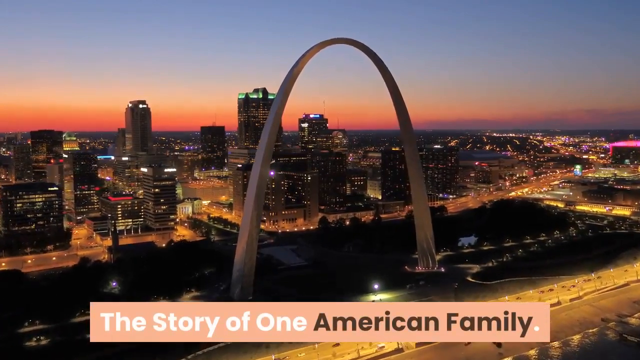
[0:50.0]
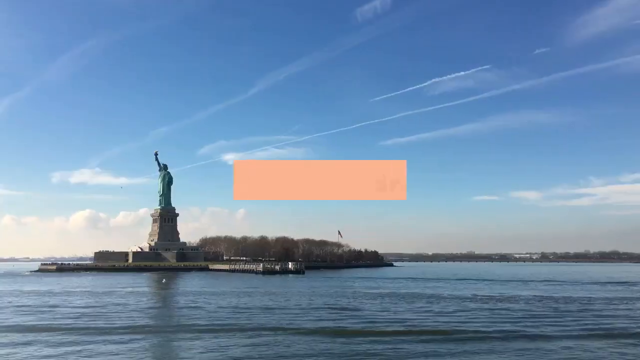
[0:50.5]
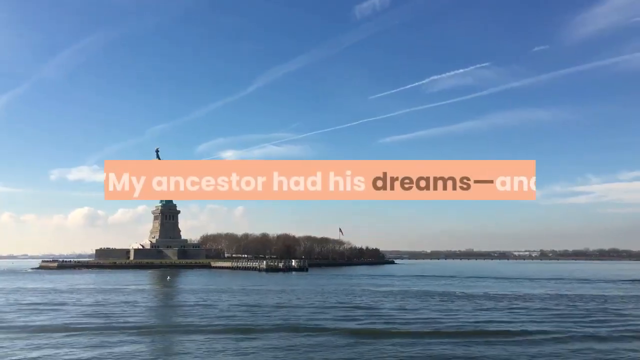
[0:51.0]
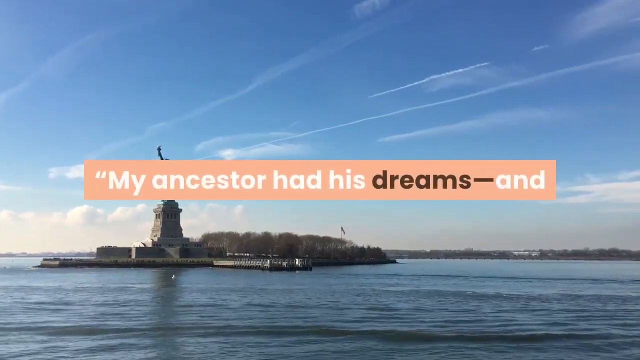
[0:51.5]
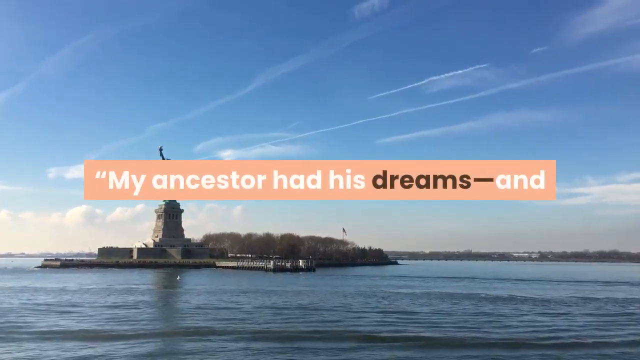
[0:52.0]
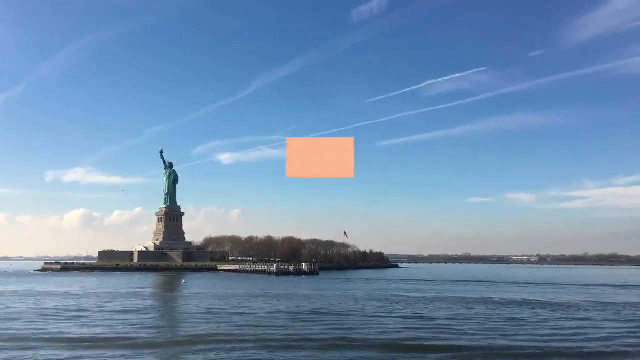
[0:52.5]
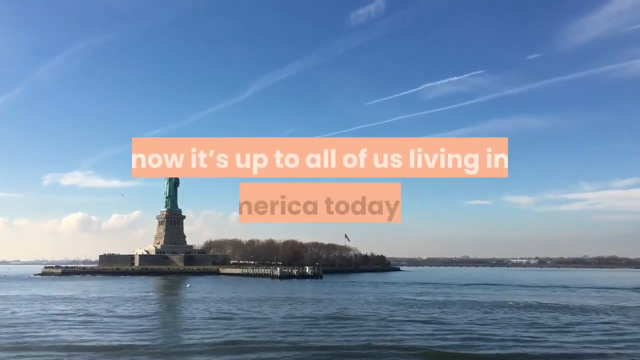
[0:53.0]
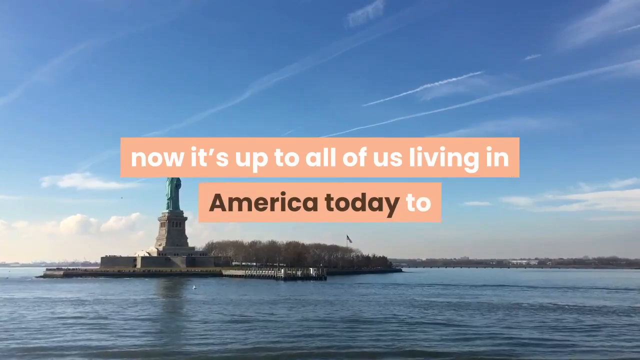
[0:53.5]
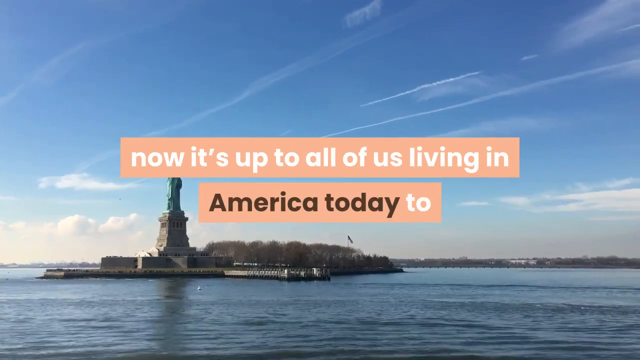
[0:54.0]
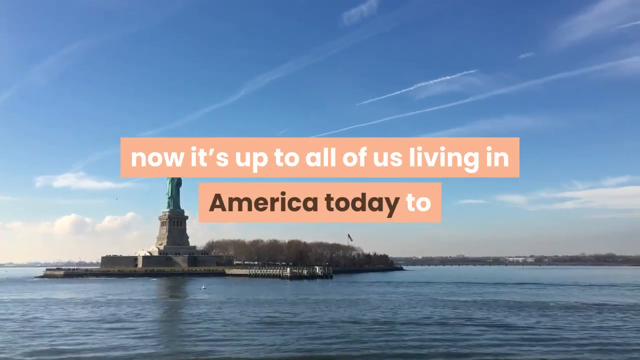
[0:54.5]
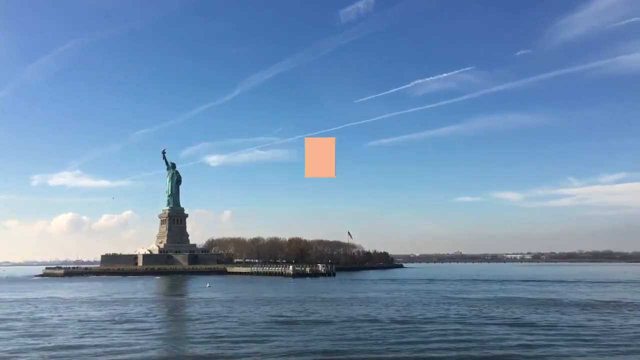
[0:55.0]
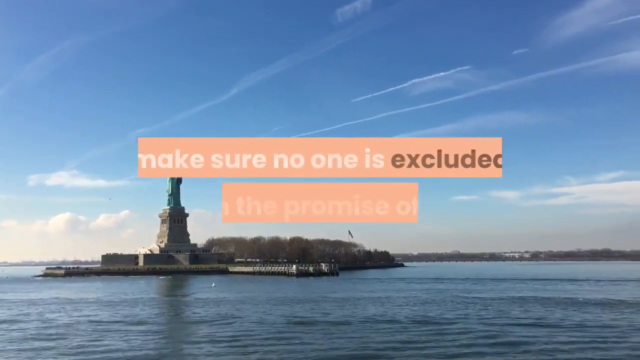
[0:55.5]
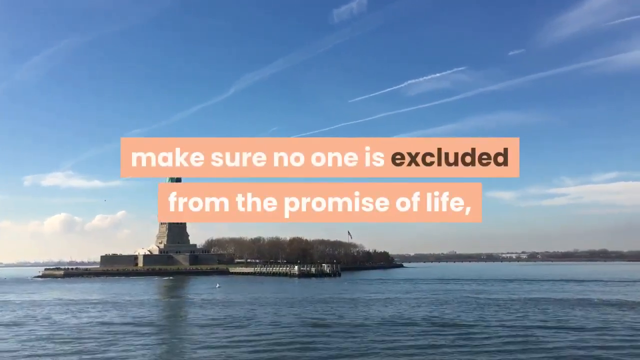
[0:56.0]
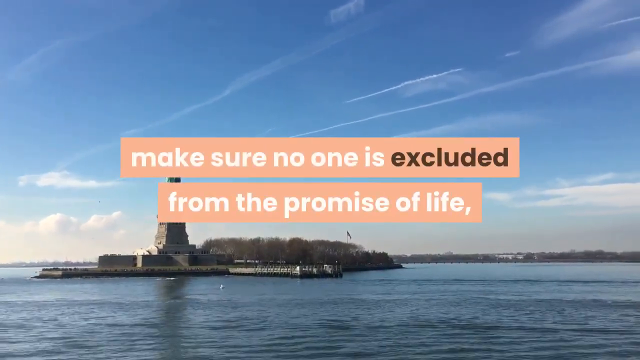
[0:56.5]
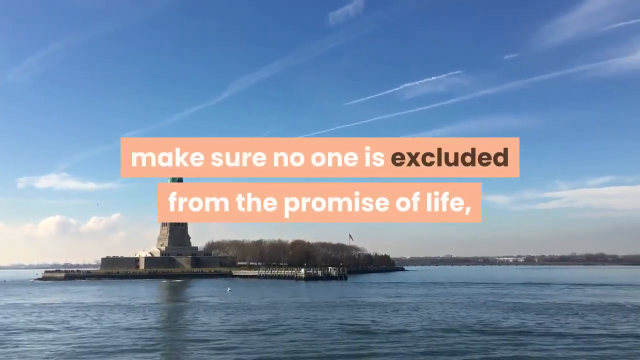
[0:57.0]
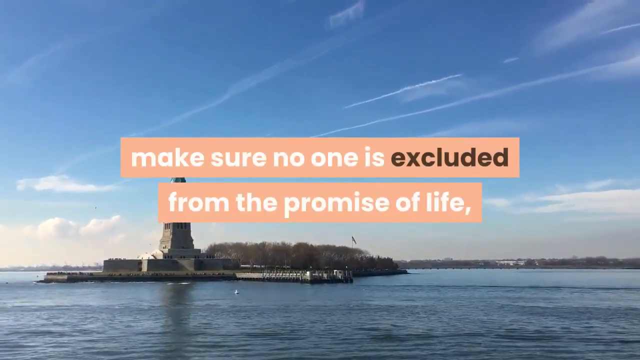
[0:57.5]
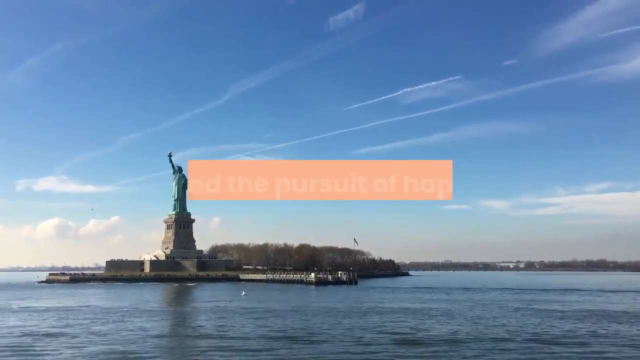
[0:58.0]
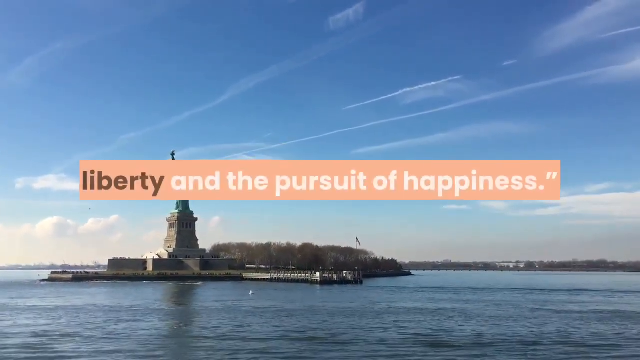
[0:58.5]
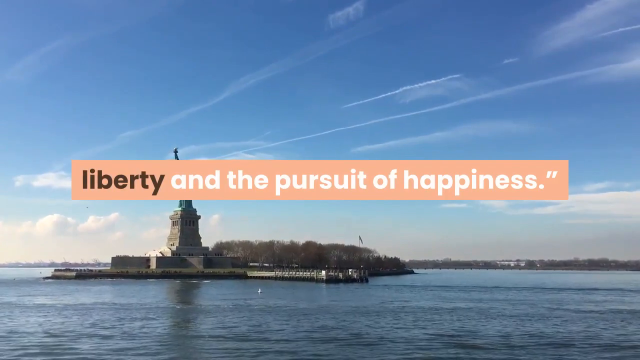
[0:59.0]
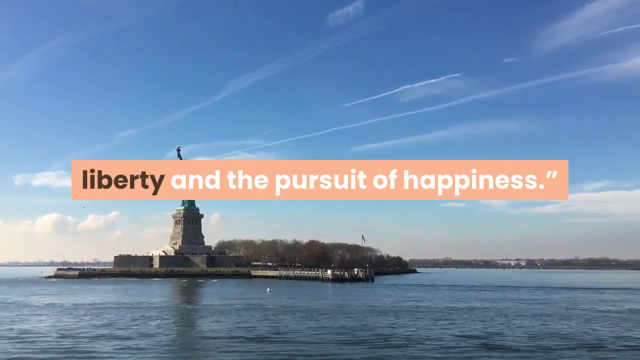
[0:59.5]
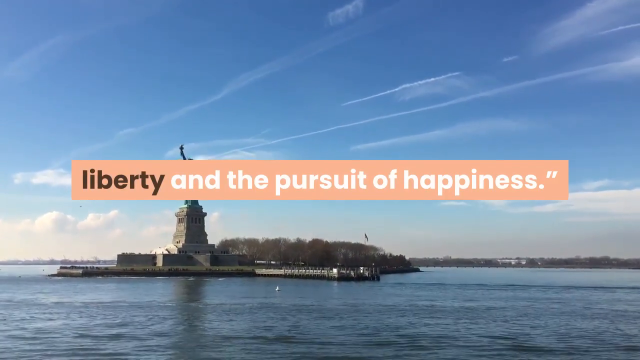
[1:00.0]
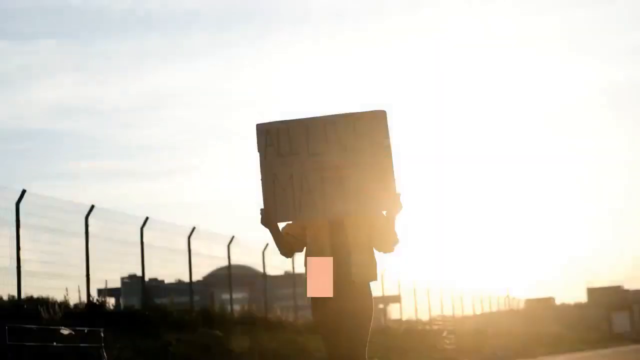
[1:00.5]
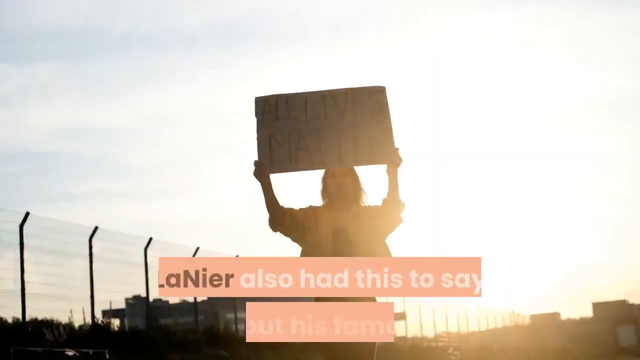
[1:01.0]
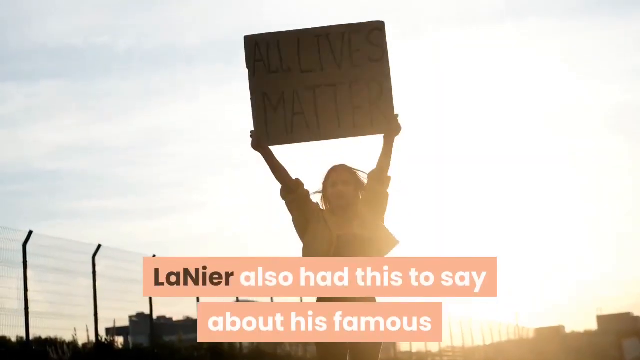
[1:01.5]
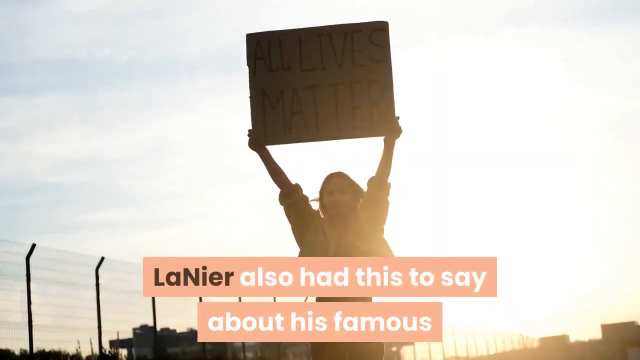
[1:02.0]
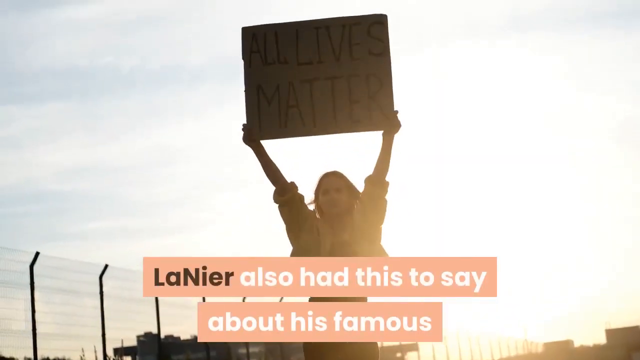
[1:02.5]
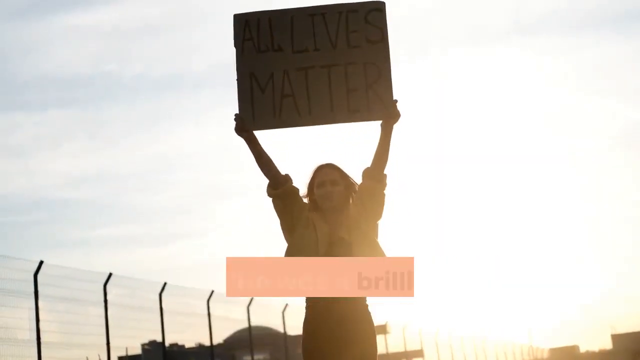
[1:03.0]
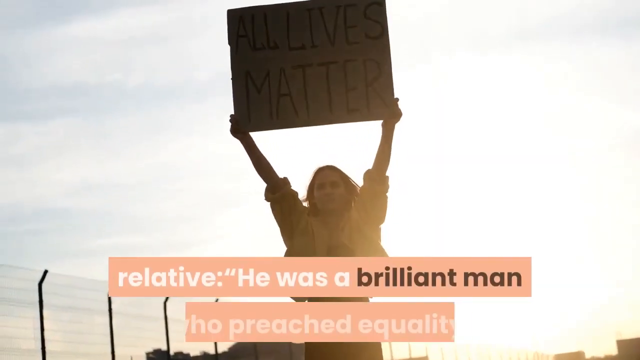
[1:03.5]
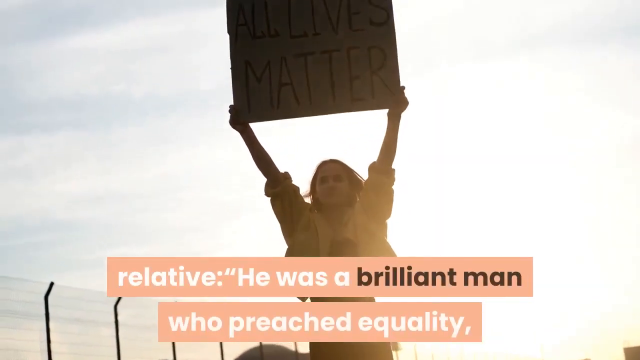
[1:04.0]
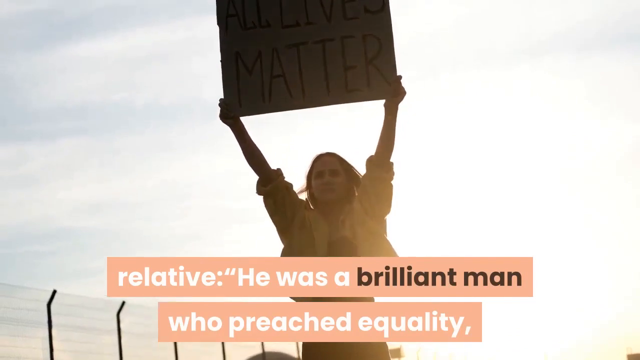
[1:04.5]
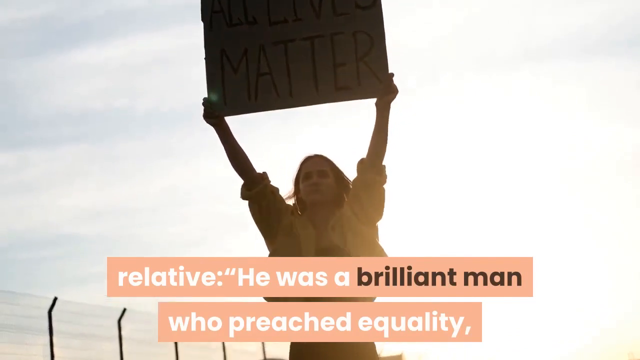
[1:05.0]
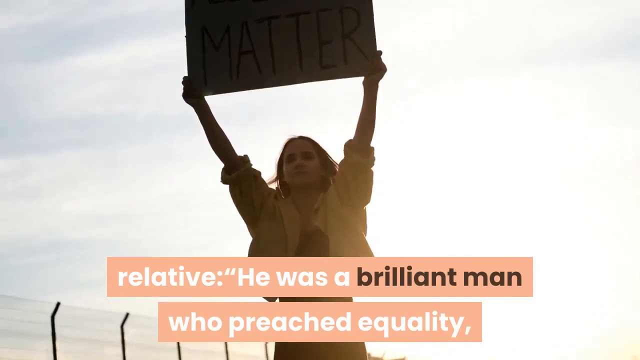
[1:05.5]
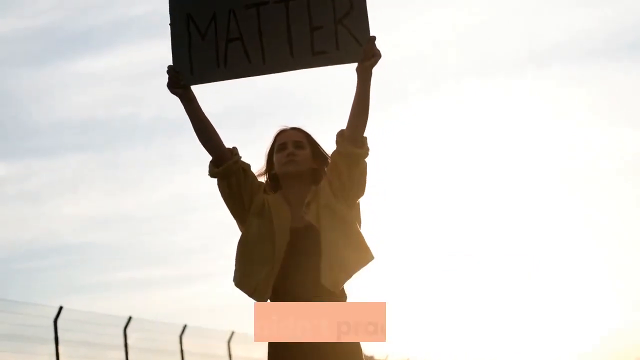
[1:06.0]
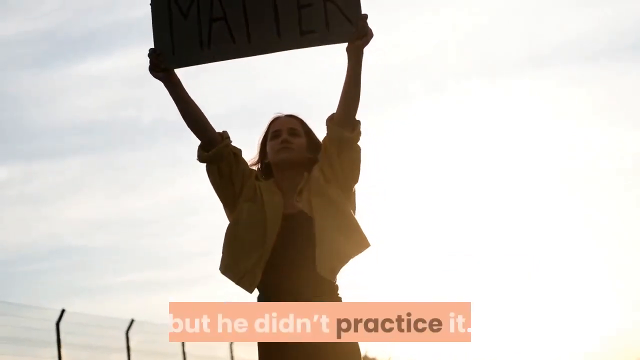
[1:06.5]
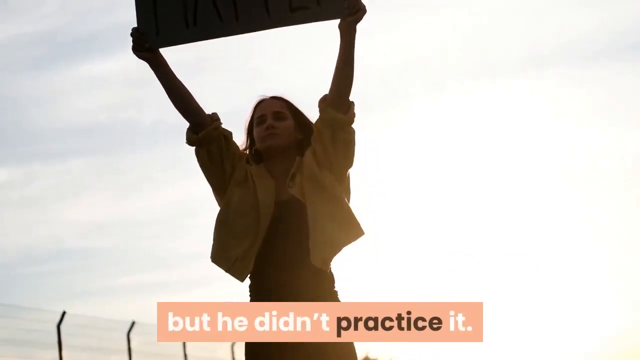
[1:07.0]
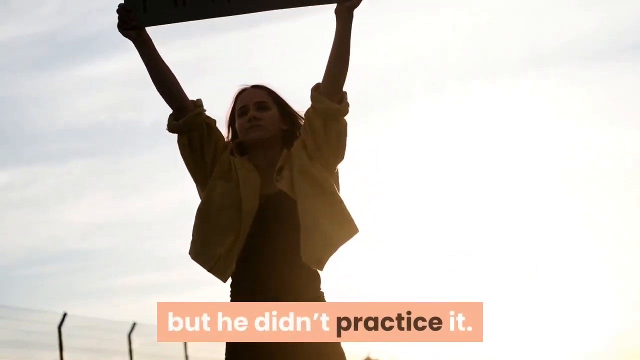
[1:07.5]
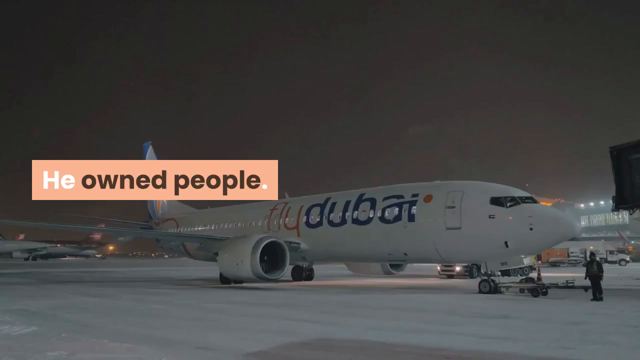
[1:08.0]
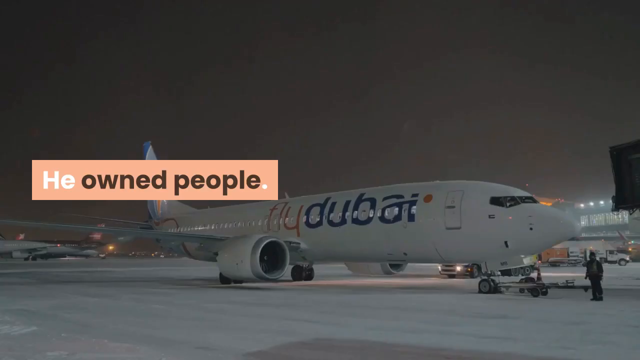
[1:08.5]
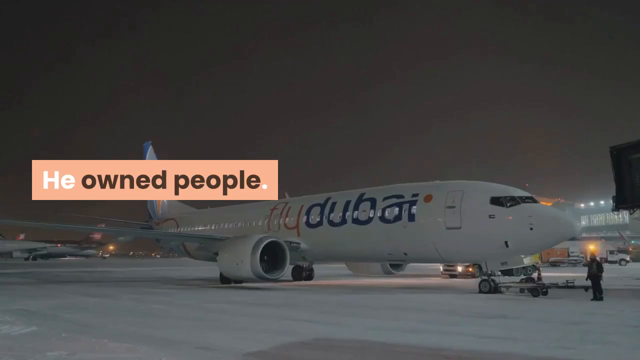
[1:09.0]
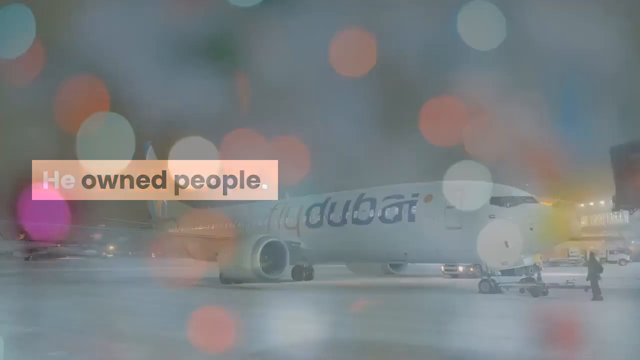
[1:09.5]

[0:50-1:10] The text continues with "the story of one American family" and the quote: "my ancestor had his dreams and now it's up to all of us living in America today to make sure no one is excluded from the promise of life, liberty and the pursuit of happiness." The background changes to a woman who is partially obscured by the sun, as it appears to be around sunset. She holds up a large sign reading "all lives matter". The text reads: "Lanier also had this to say about his famous relative, he was a brilliant man who preached equality, but he didn't practice it." As the text continues, the background changes again to what appears to be an airport scene, with a stationary aeroplane bearing the lettering "Fly Dubai" and other aircraft nearby. A man stands in front of the aircraft. The text continues: "He owned people."